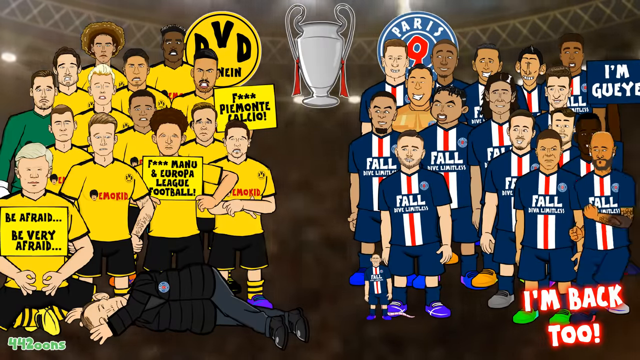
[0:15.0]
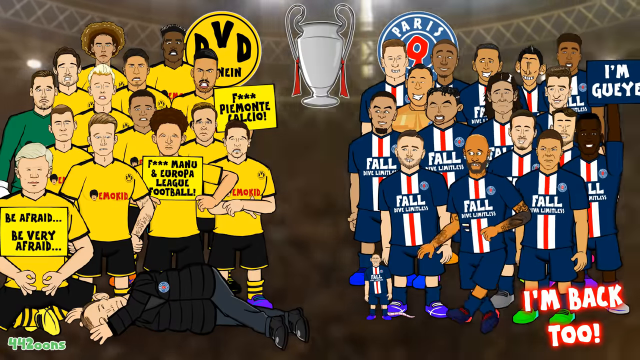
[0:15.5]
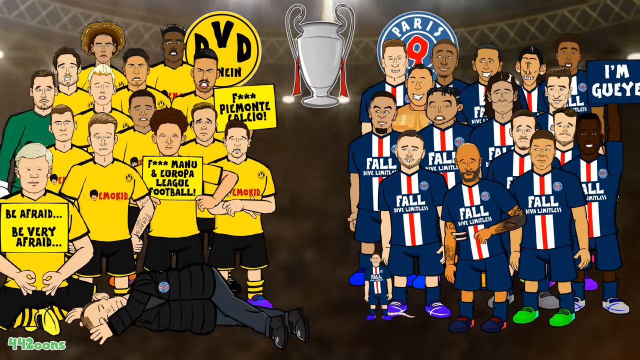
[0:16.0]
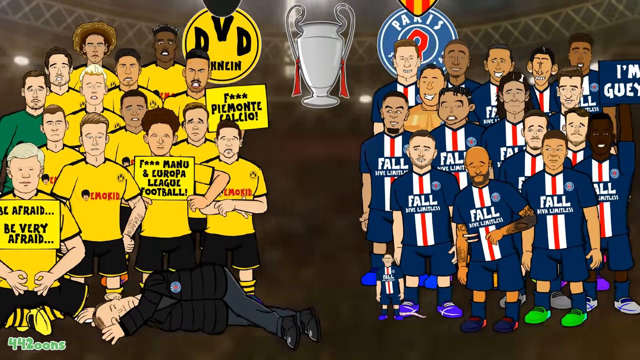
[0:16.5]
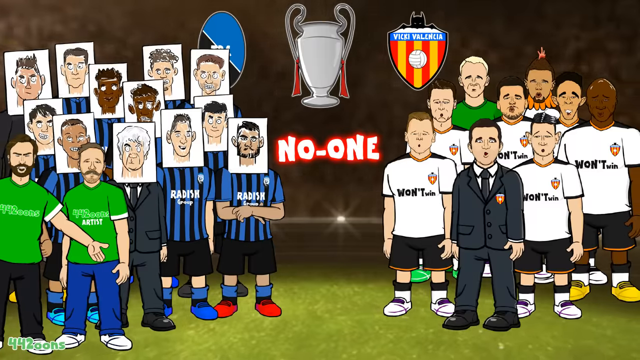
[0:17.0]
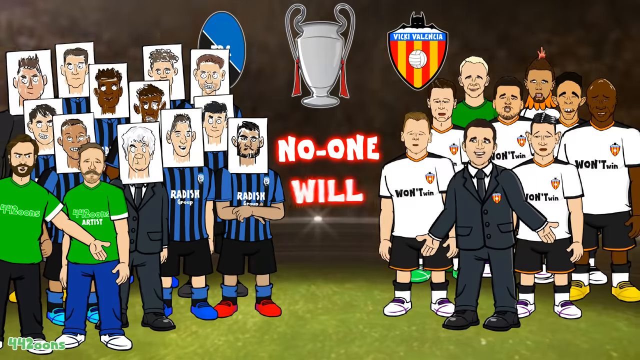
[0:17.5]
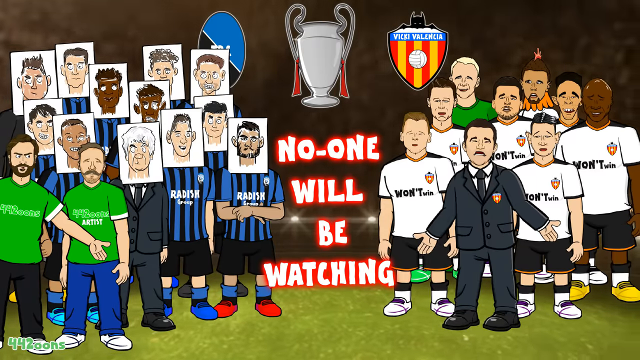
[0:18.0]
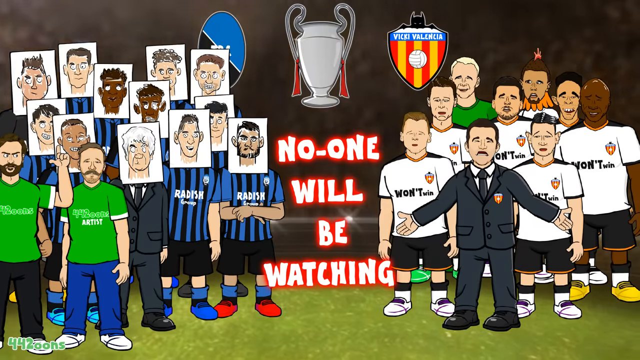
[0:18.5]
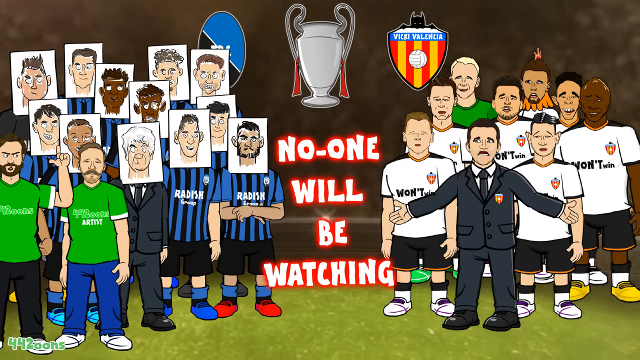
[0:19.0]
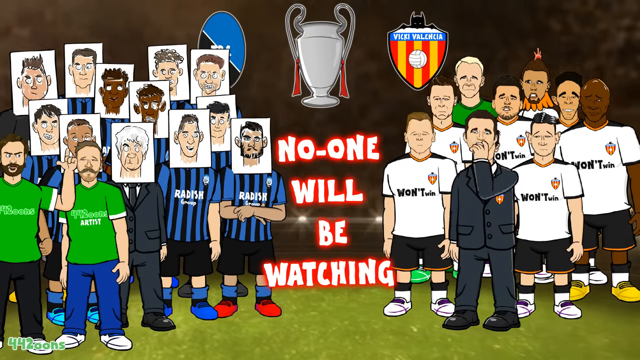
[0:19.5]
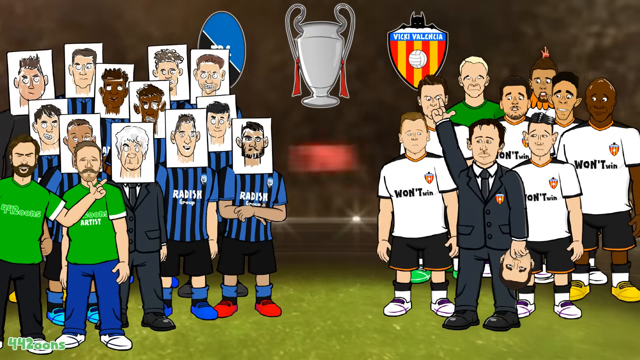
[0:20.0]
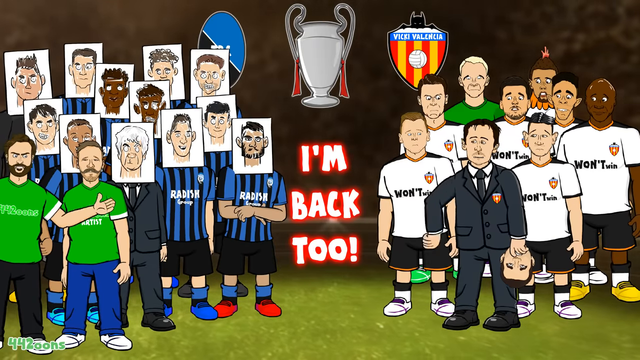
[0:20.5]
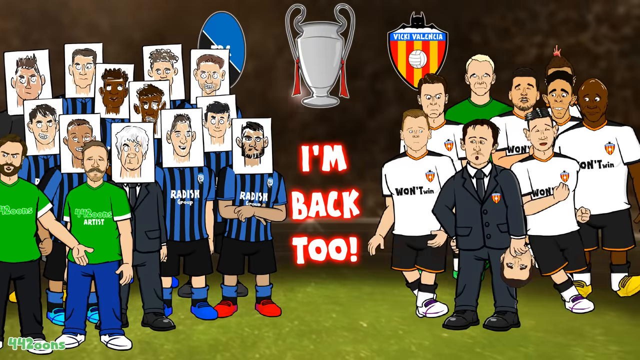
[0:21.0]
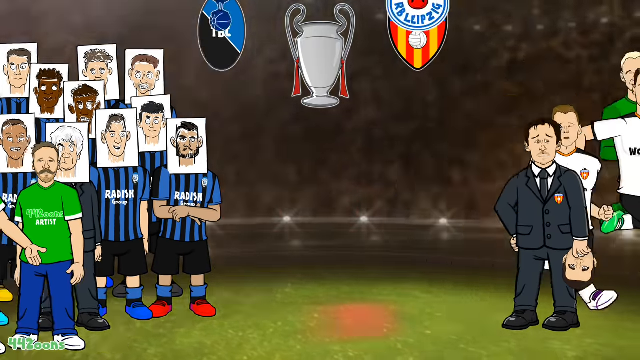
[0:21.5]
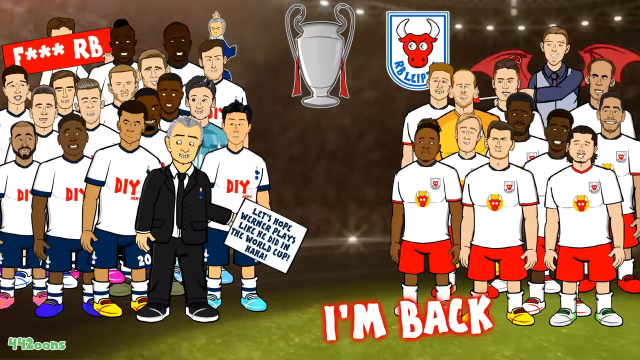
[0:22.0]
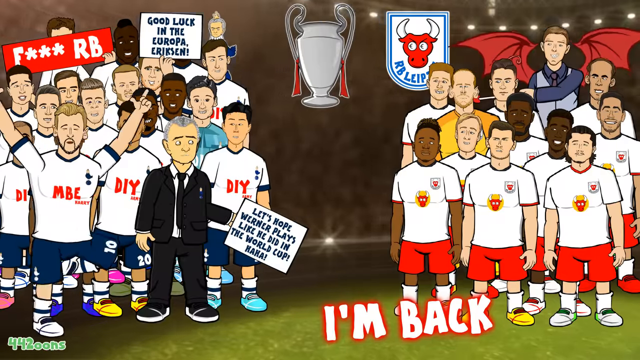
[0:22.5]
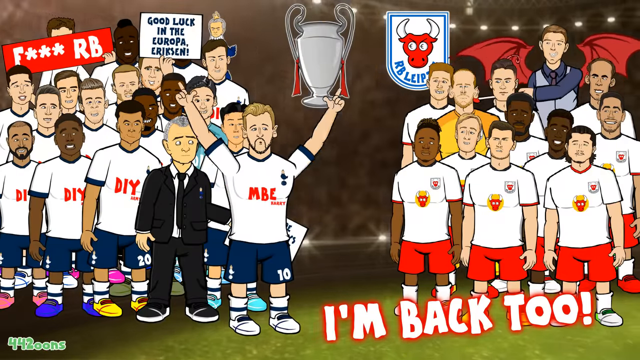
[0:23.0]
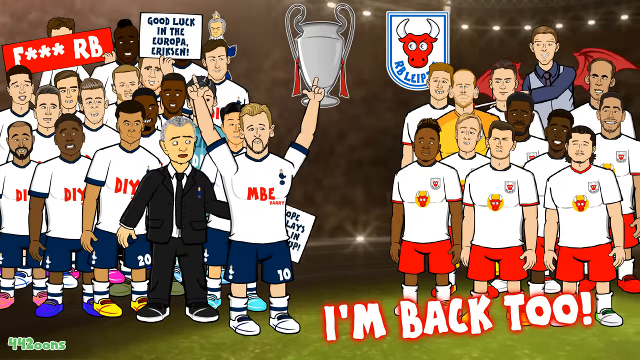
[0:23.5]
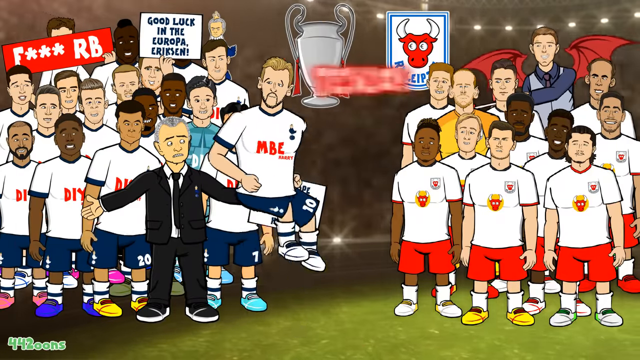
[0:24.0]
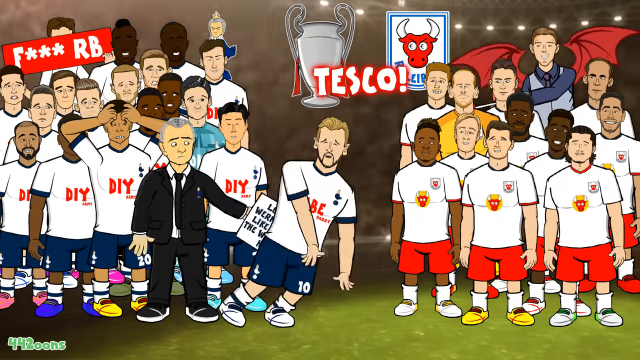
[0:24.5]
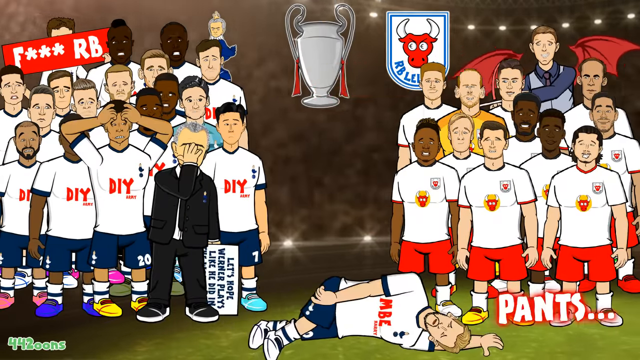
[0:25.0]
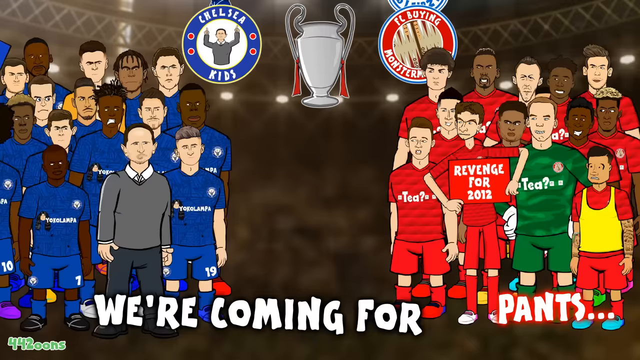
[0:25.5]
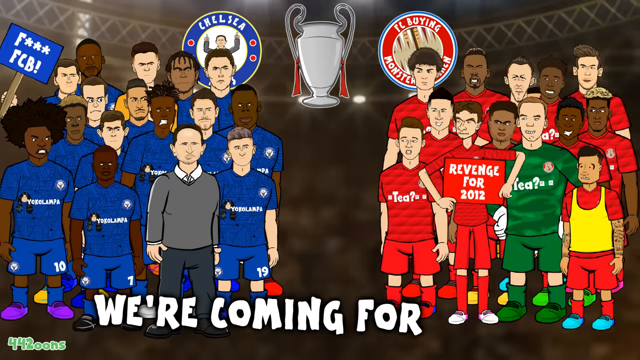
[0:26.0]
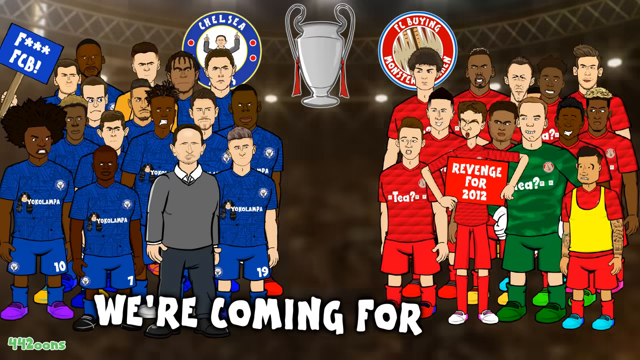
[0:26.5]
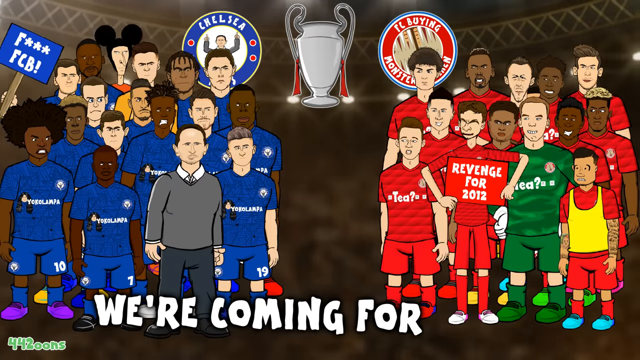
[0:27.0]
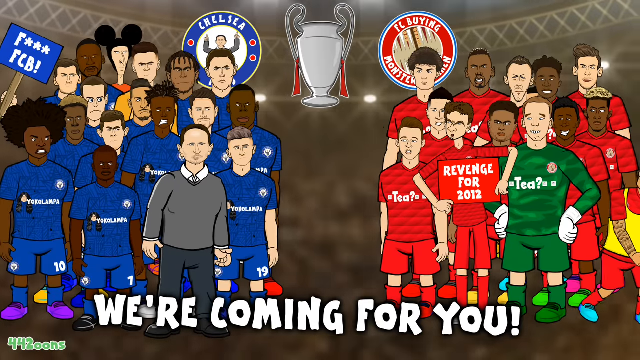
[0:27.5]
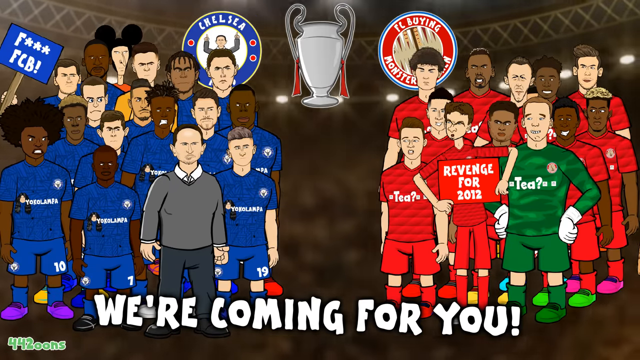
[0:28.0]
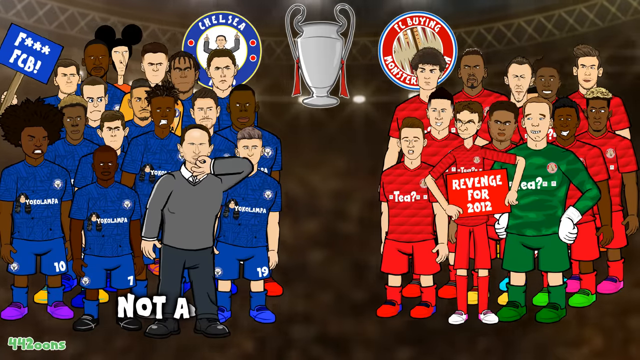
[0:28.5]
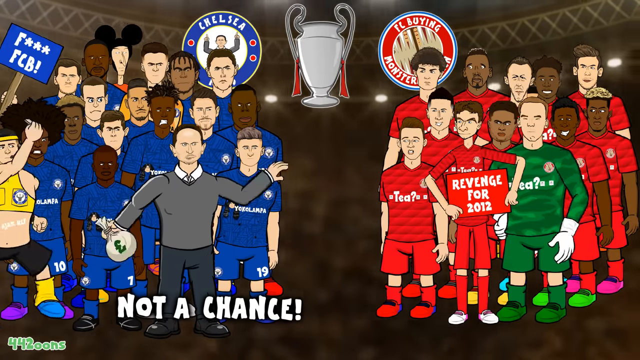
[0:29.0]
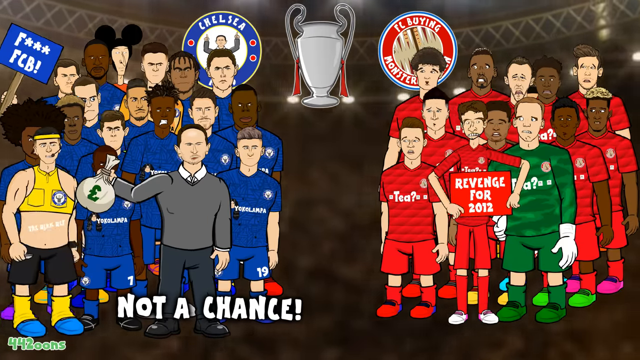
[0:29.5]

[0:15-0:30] A team in yellow and a team in blue are shown. The apparent manager of the blue team gets kicked by one of his own players, and as he is kicked, text appears on the screen saying "you can have him back for good". The player in the blue jersey kicks him over to the yellow team, and he ends up lying on the floor passed out in front of the yellow team. The animation then moves to a different pair of teams. The team on the left wears blue jerseys with black stripes, and their faces cannot be seen; it looks like a piece of paper with a drawing of a face has been put in front of each of their faces. The team on the right wears white jerseys, with a coat of arms that says "Vicky Valencia" on top. Text in the middle reads "no one will be watching", and the blue jerseys say "Radish Group". The white team runs away. Next come two new teams in white jerseys, and another guy falls on the floor. It then cuts to two new teams, one in a blue jersey and one in a red jersey, and the words "not a chance" appear on the screen.